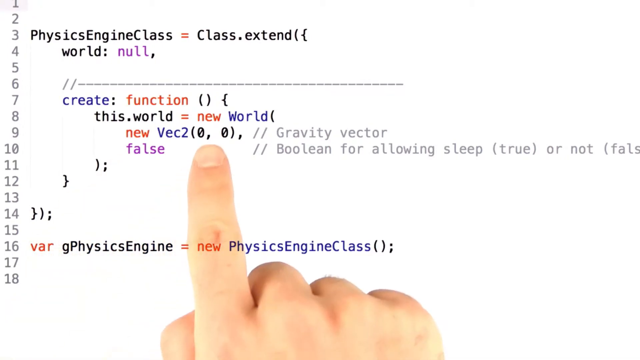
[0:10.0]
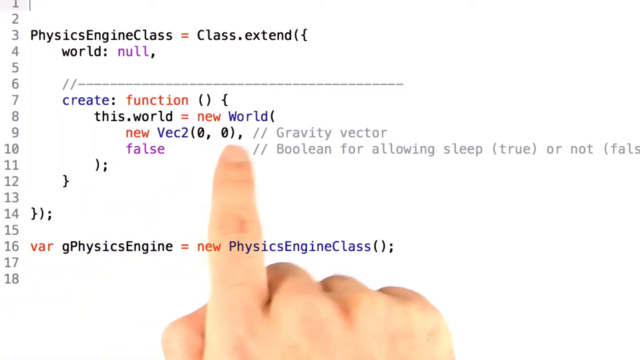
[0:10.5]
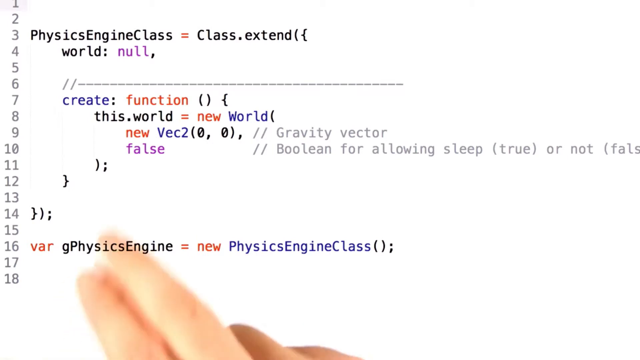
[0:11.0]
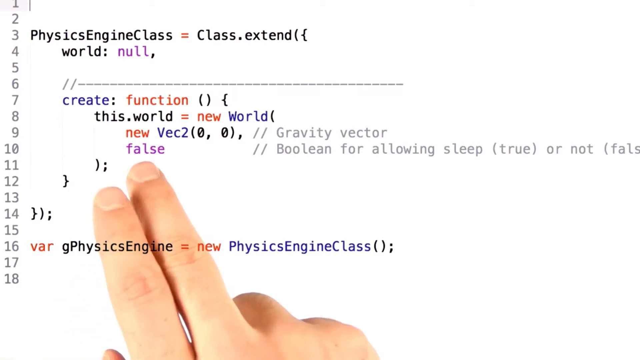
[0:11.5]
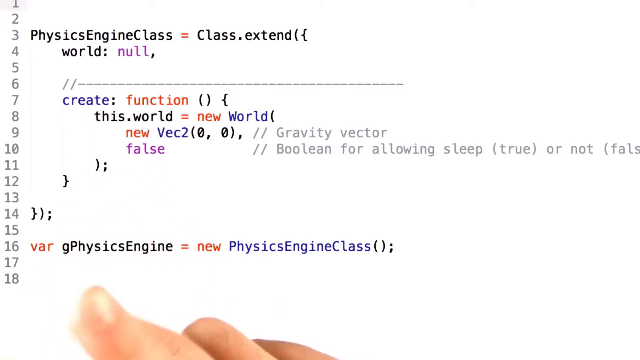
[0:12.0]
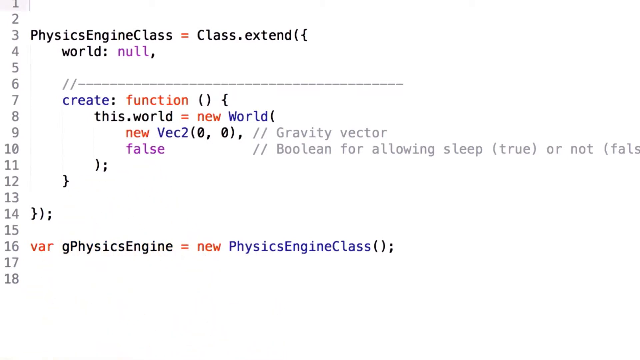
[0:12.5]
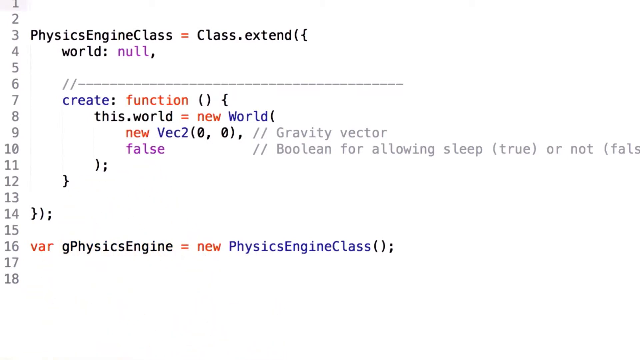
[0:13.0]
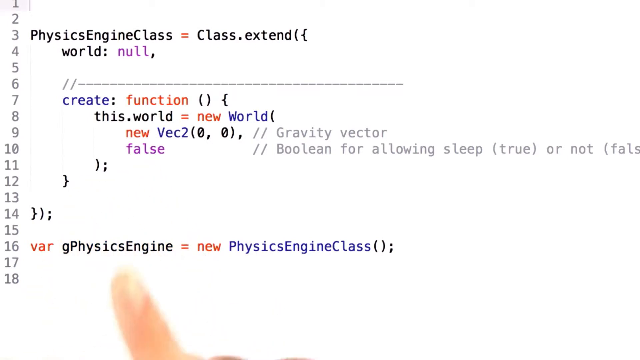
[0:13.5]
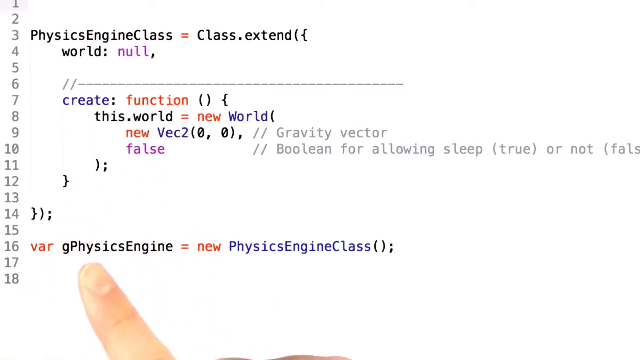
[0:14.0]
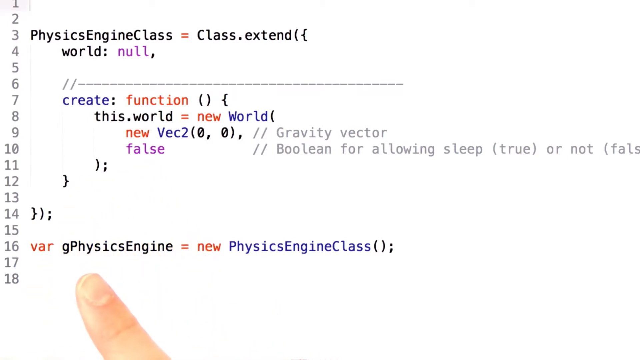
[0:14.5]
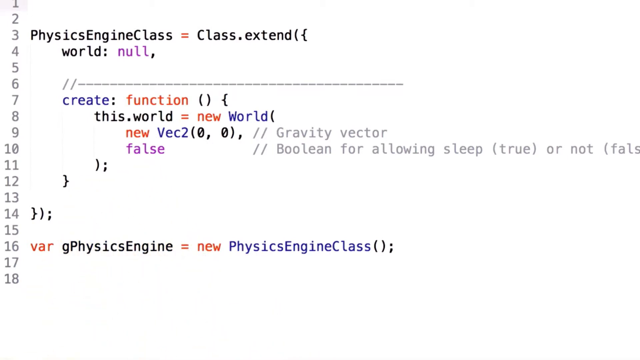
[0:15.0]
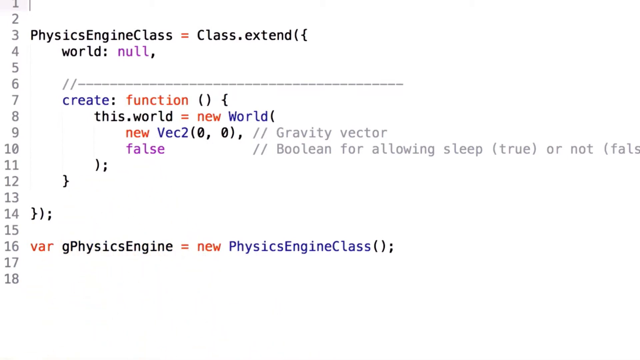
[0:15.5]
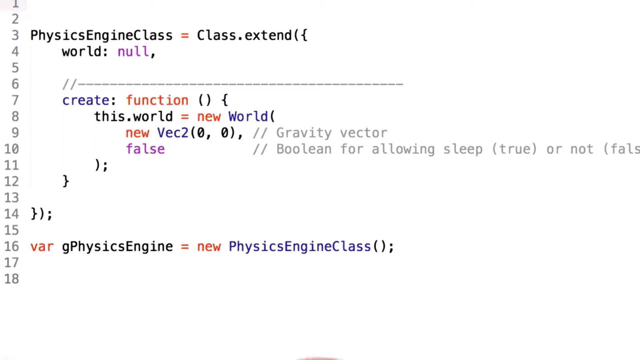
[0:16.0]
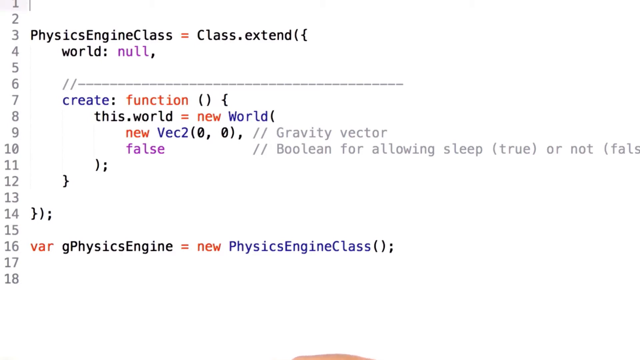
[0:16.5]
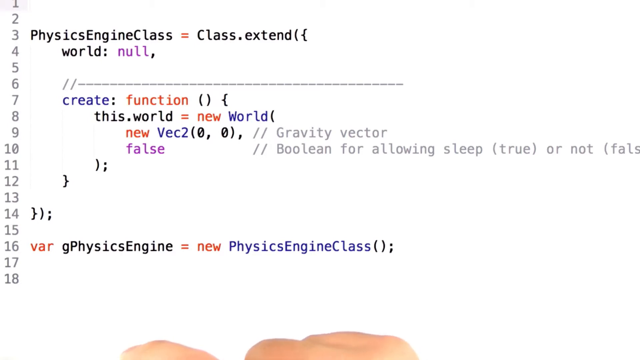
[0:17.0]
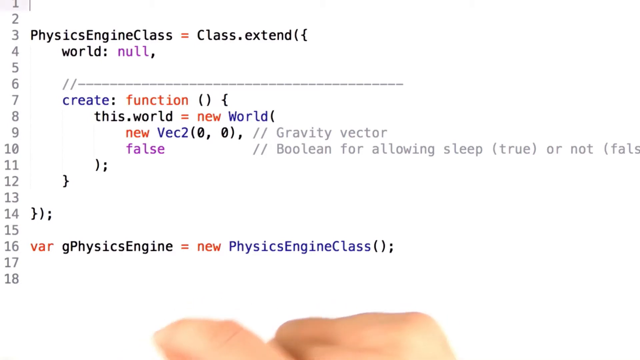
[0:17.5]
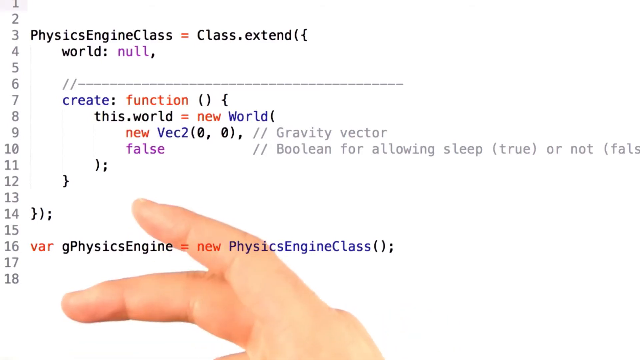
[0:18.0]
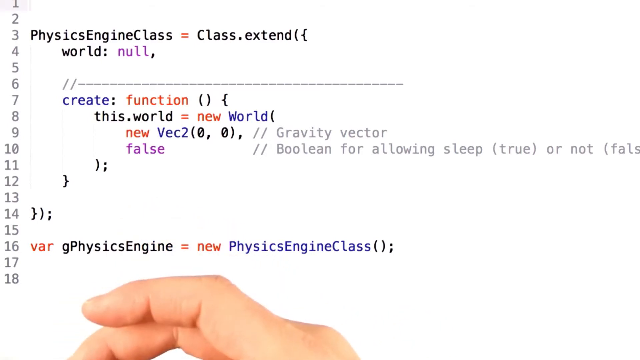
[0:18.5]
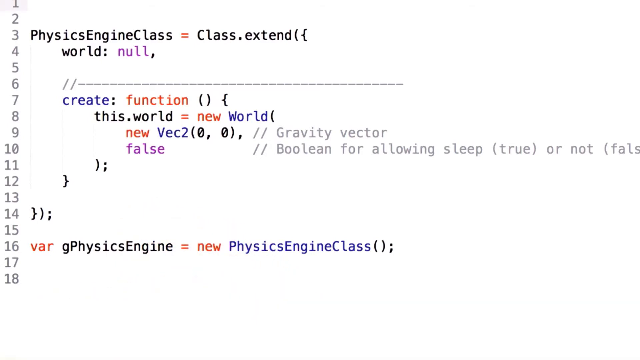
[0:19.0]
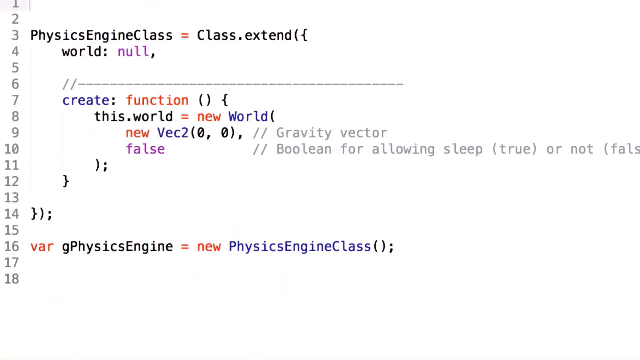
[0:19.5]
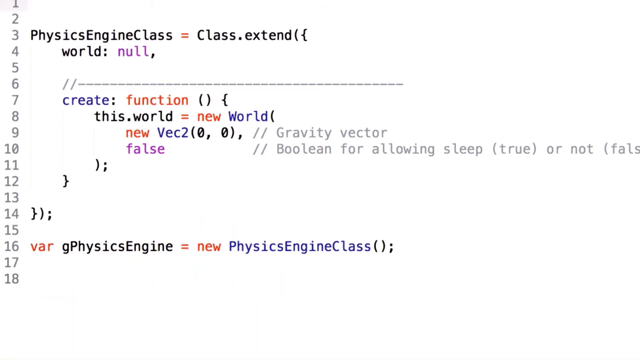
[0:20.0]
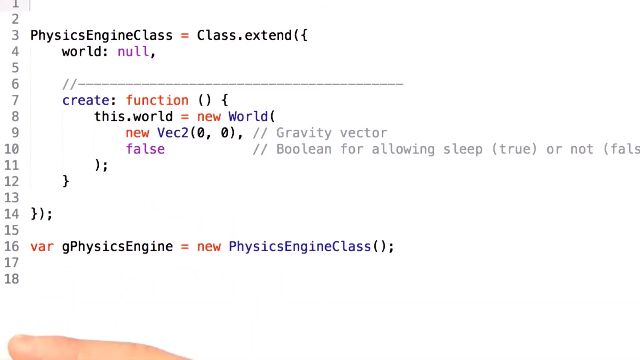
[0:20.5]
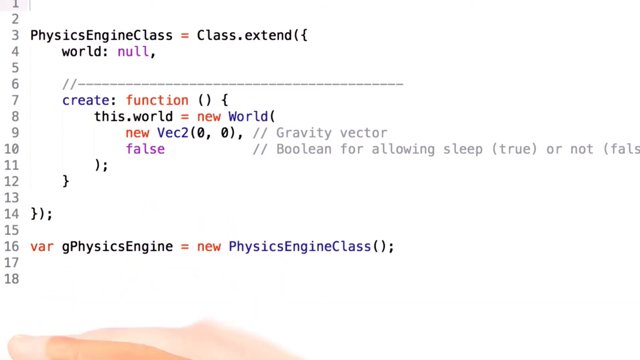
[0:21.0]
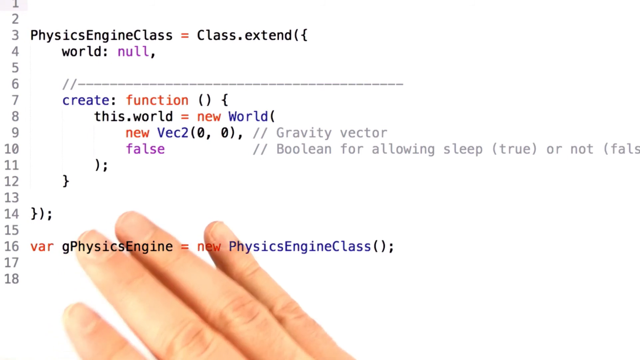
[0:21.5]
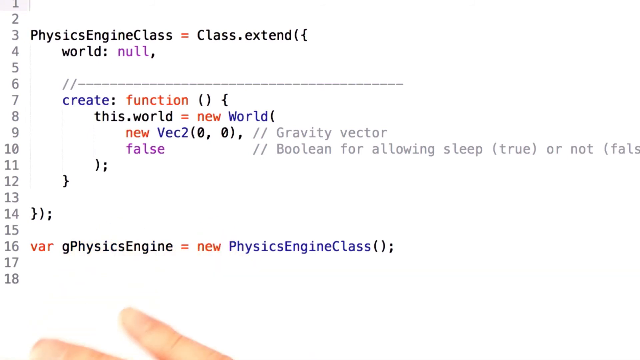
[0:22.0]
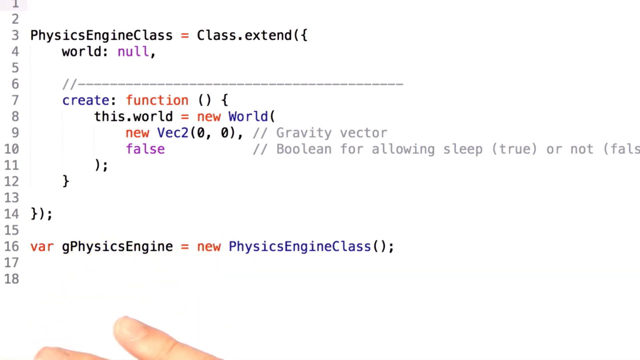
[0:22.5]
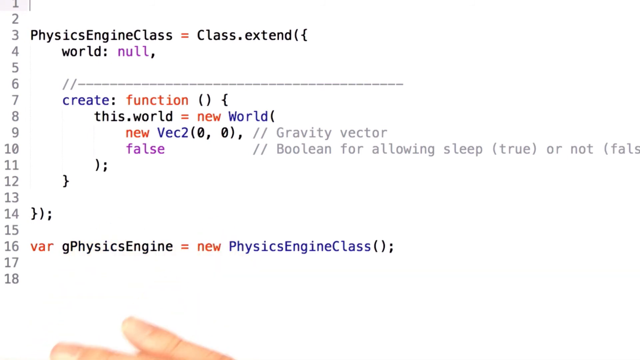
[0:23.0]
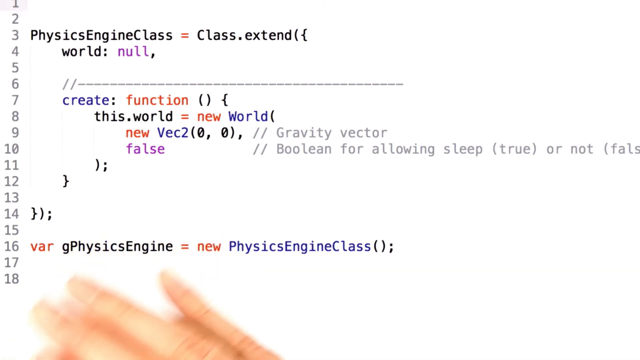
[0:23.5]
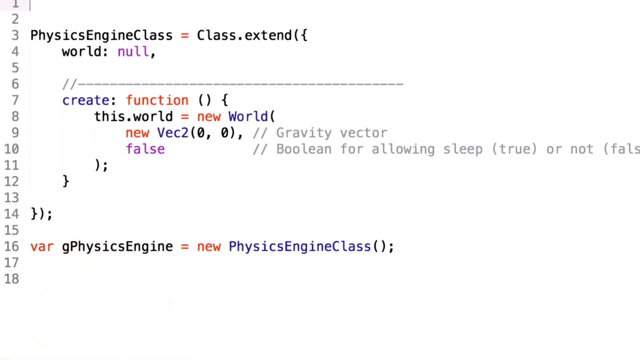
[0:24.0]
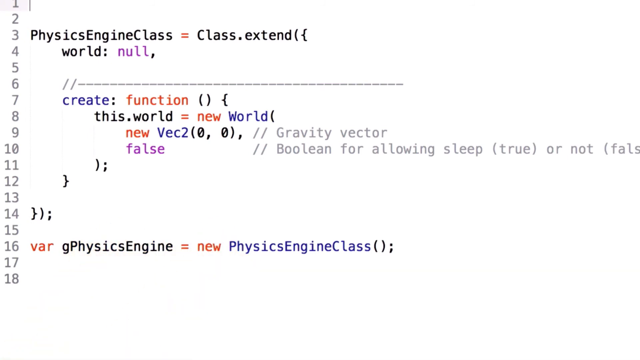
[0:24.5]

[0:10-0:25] The white coding terminal still shows the JavaScript class. On the third line, PhysicsEngineClass equals class.extend. A variable called world is initialized to null, and a function contains this.world equals new world, with two parameters: new vector 2 with coordinates 0,0, and a false boolean. Outside the entire class, a variable called gPhysicsEngine is initialized to equal new PhysicsEngineClass. A finger in the background points to the coordinates part of new vector 2, 0,0. The finger goes out of the screen and then points to the false value, goes out of the screen again and points to the gPhysicsEngine class object at the bottom of the screen, then goes out of frame again. The hand is then seen gesturing in the background with the palms facing up. The hand goes out of frame again, and then the back of the hand appears in the frame, moving forward and backward.